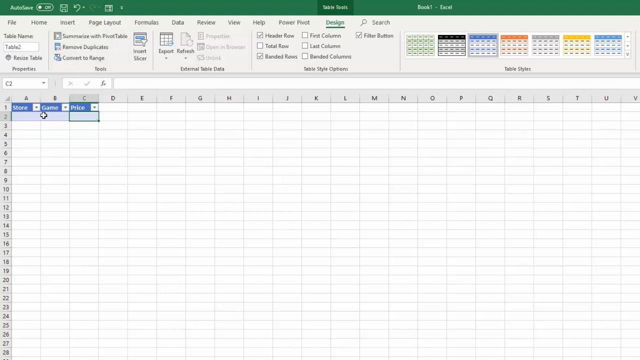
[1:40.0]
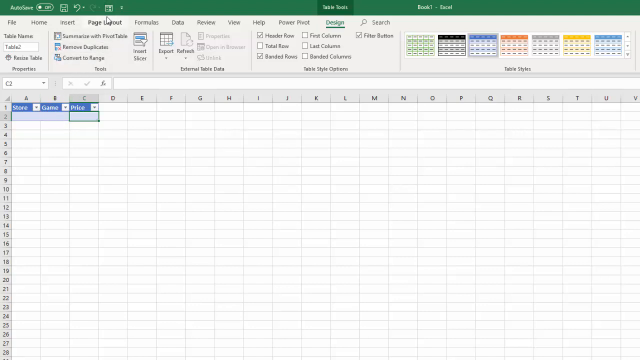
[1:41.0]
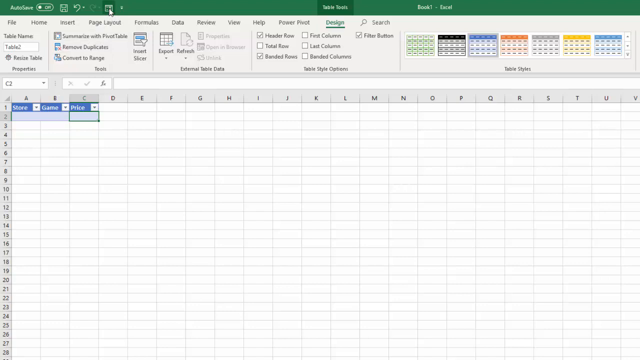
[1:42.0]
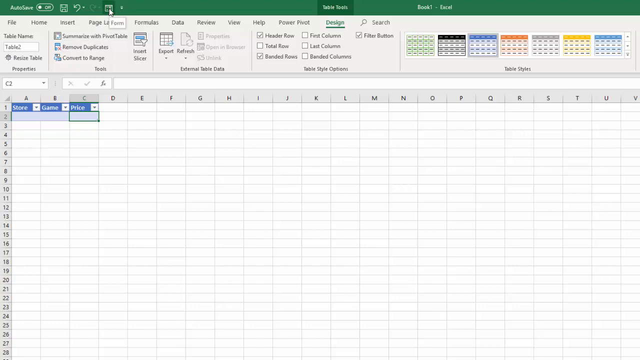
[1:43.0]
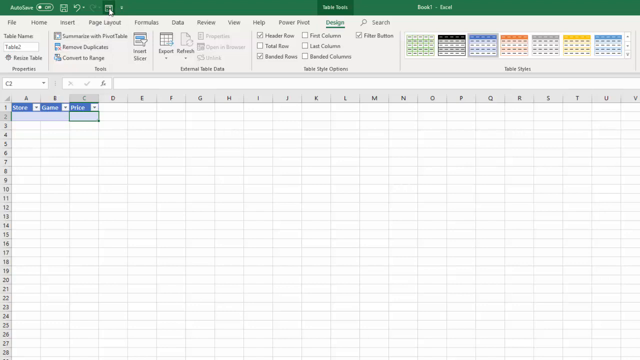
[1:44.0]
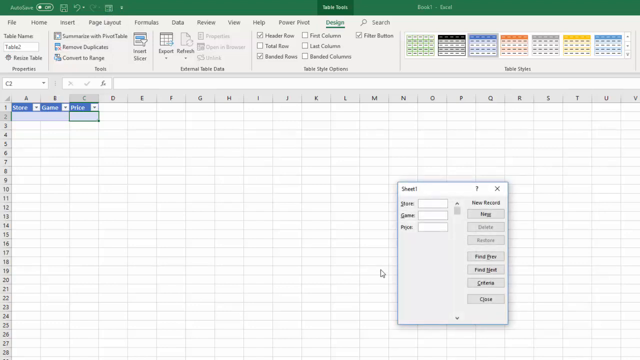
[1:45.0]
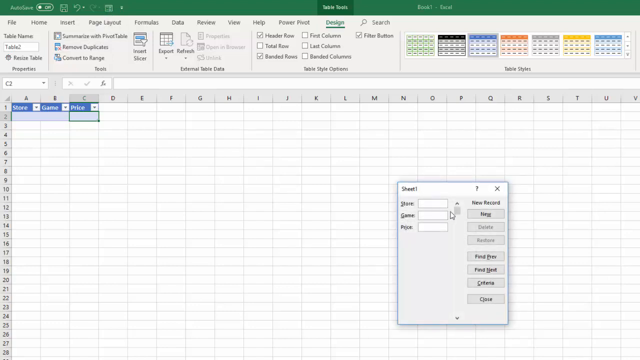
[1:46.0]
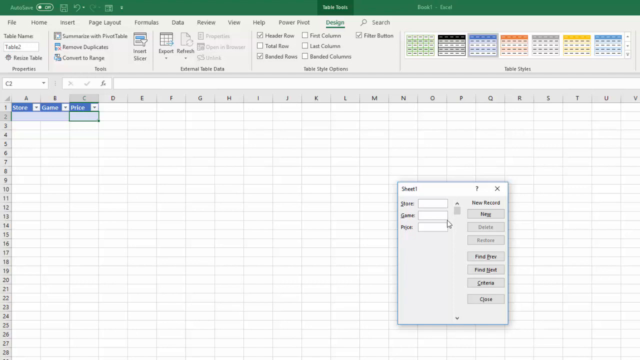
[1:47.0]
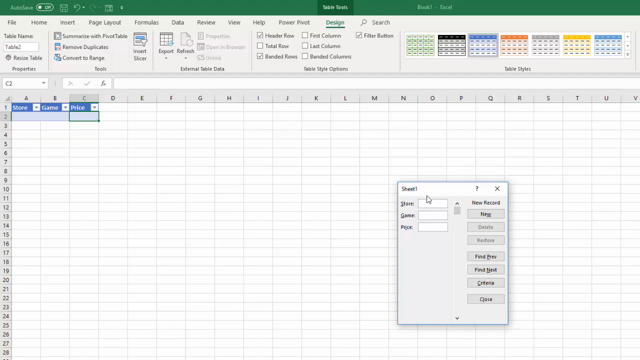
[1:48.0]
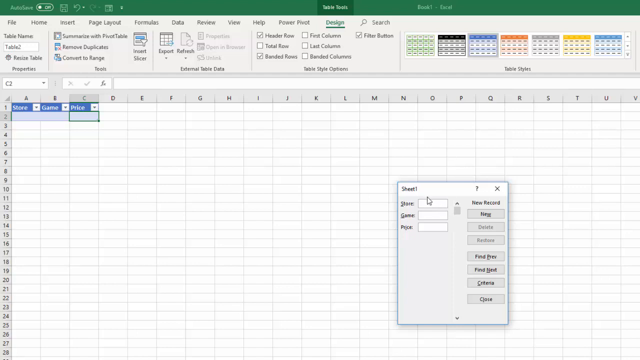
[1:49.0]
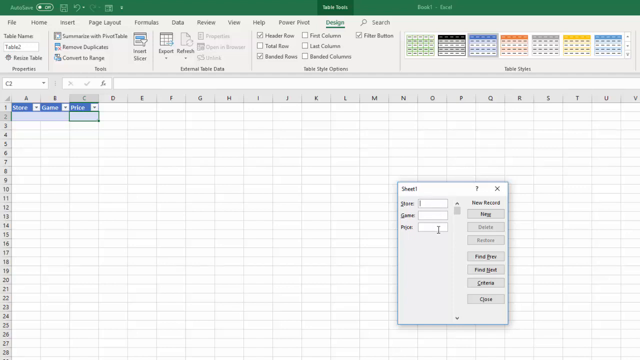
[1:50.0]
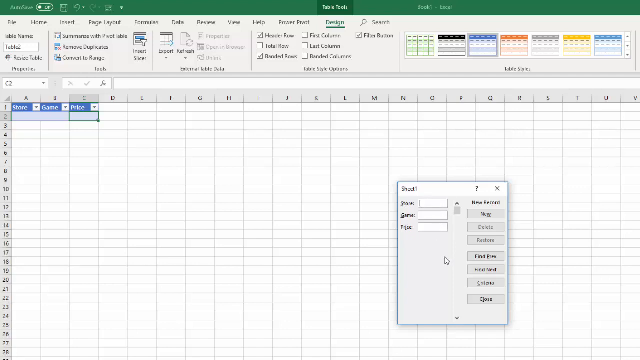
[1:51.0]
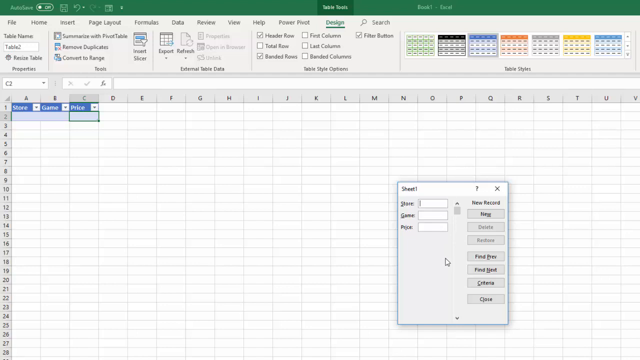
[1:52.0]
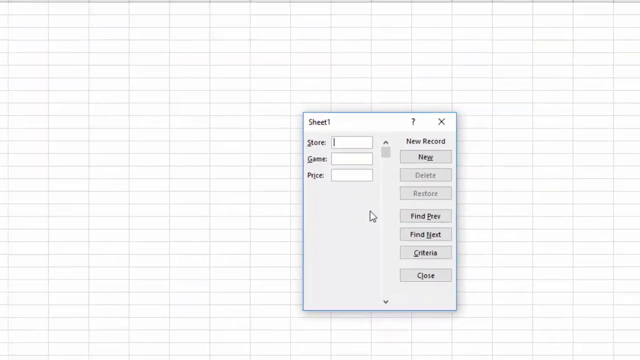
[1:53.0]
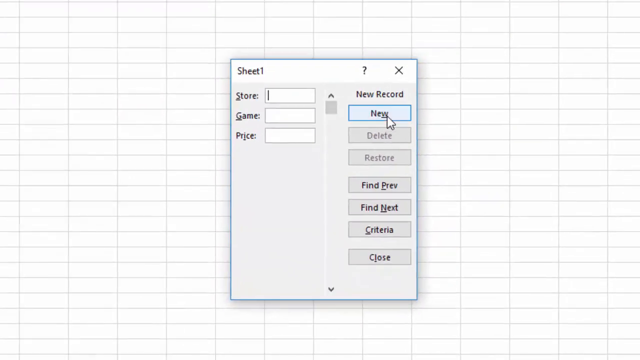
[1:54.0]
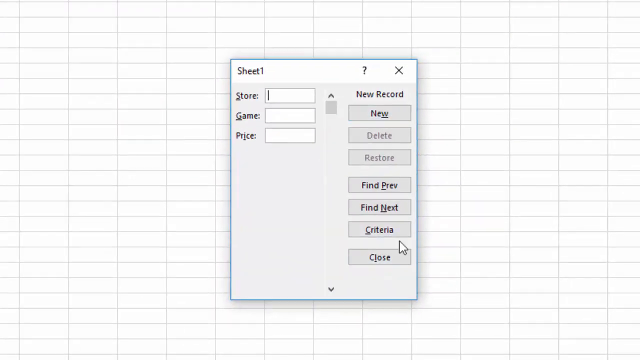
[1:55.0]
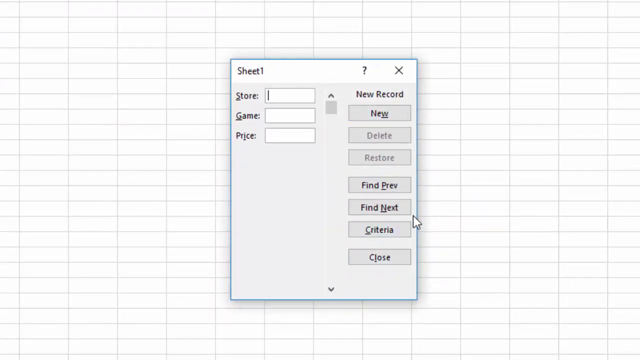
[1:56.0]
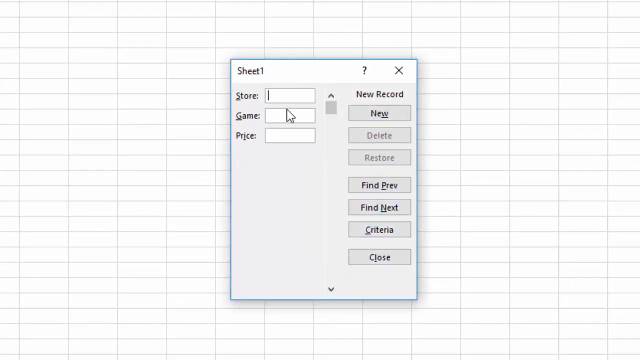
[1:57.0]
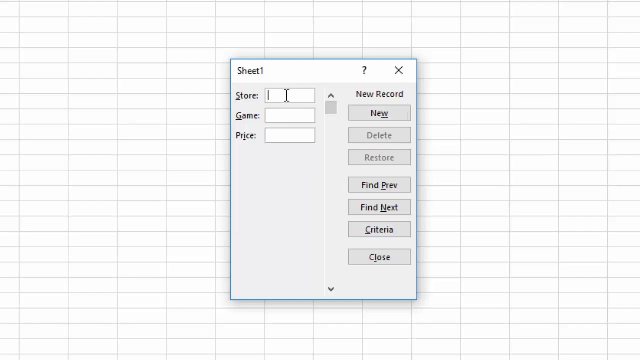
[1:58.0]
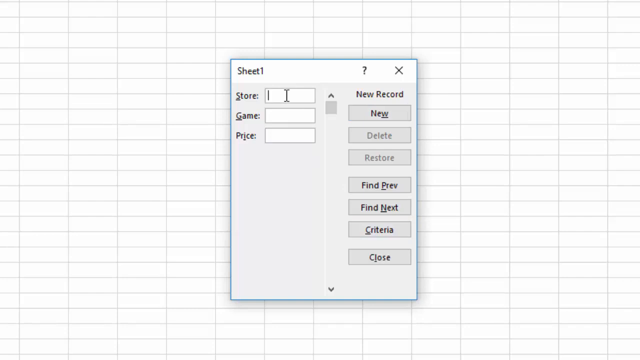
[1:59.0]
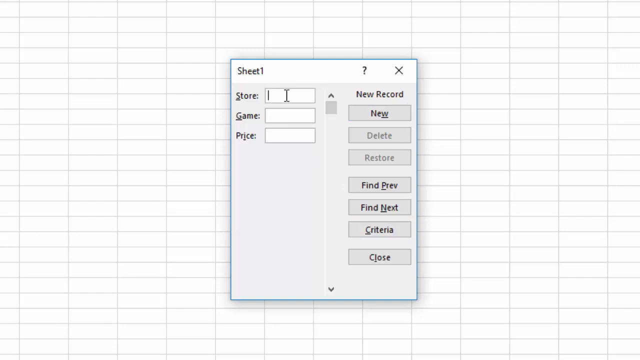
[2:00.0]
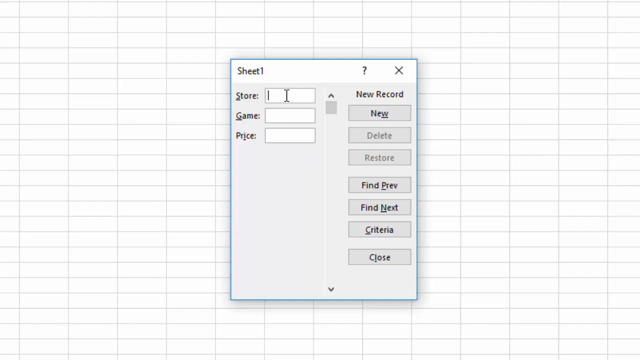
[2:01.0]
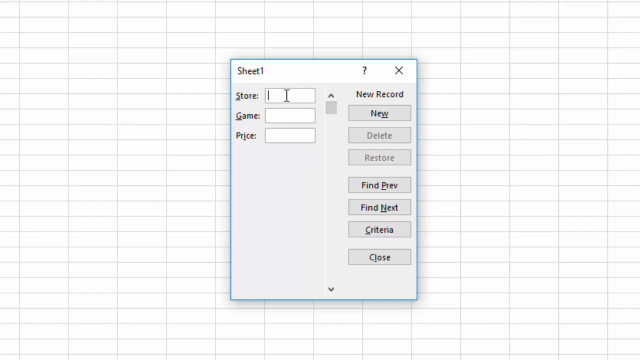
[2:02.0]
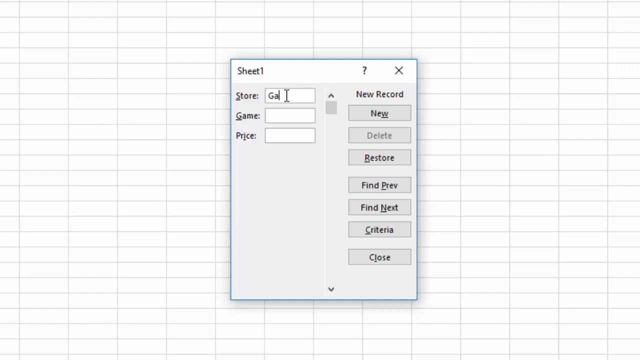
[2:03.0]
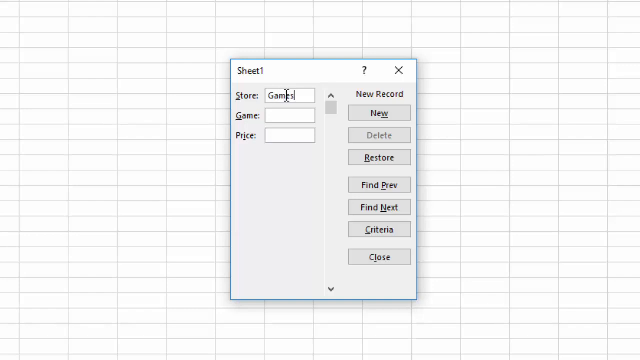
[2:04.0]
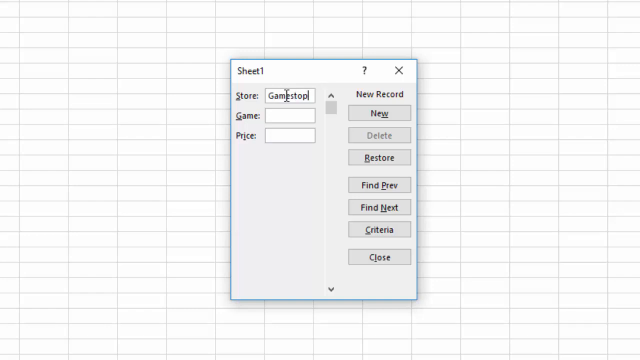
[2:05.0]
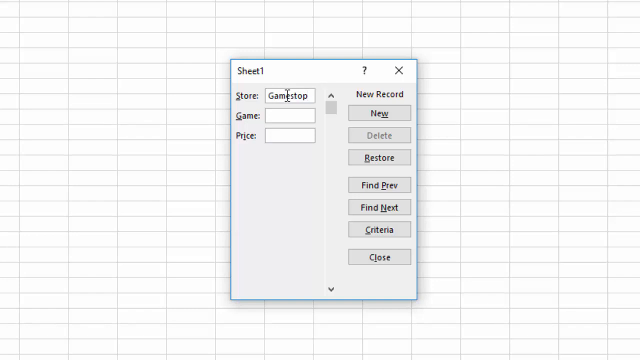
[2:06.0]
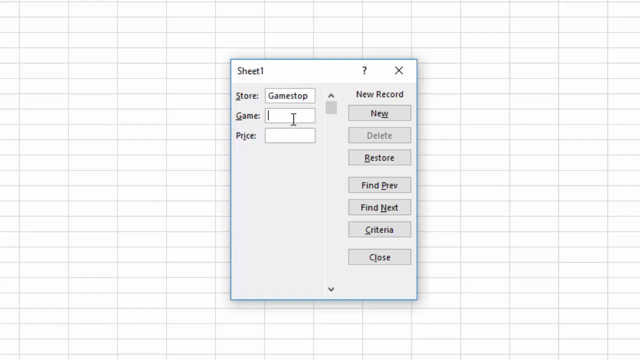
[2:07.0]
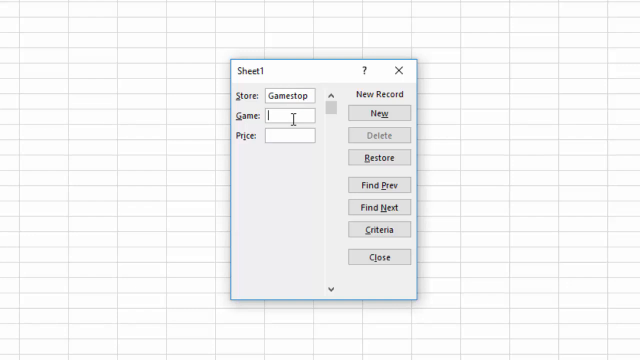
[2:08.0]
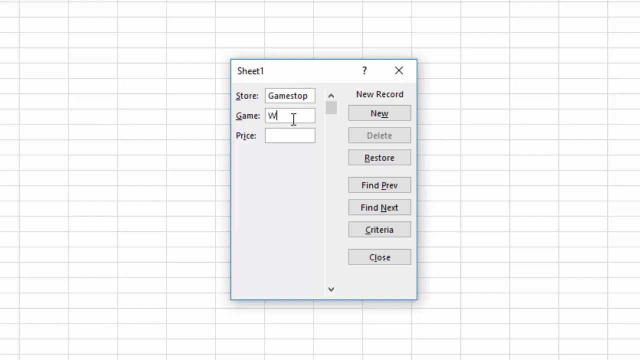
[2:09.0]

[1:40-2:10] The user goes to the top left and clicks the newly added fonts quick access button. A window that says "sheet 1" pops up with entry fields, one for each column header: game, price and store. The view zooms in on this window at the bottom right, revealing a "new record" header at its top right. Below that are several buttons; delete and restore are not clickable, while new, find previous, find next, criteria and close are clickable.